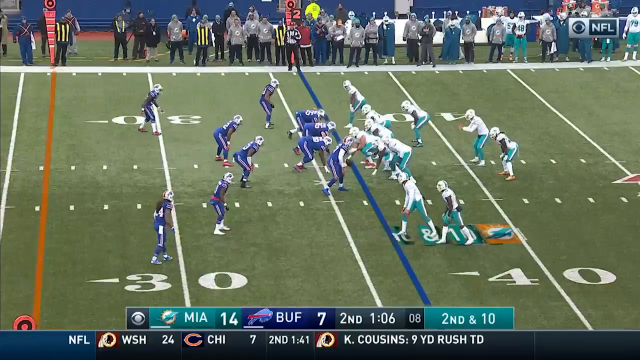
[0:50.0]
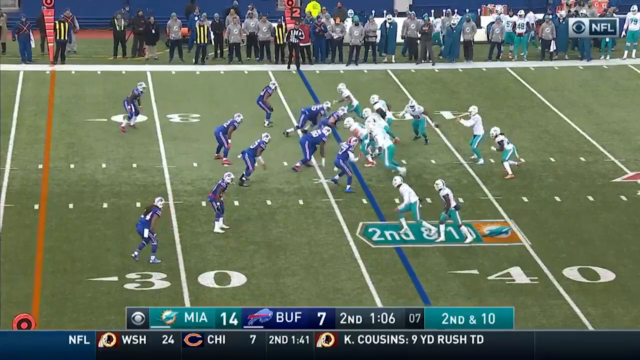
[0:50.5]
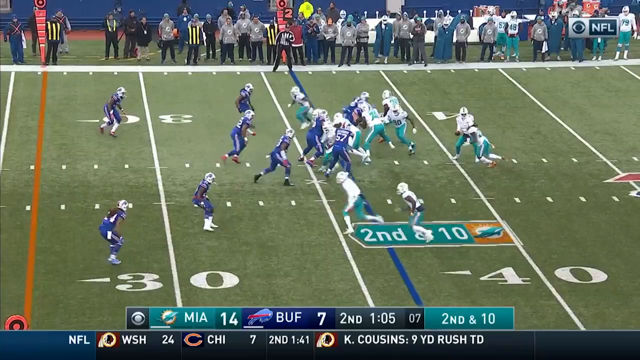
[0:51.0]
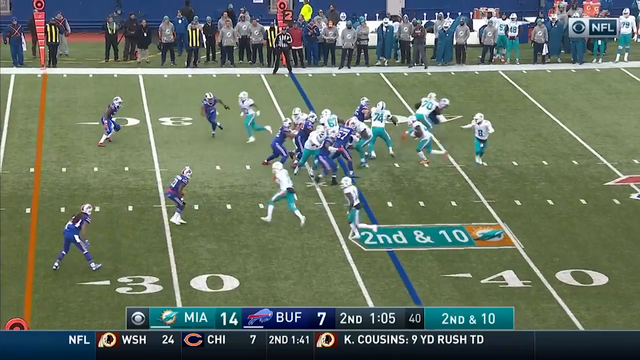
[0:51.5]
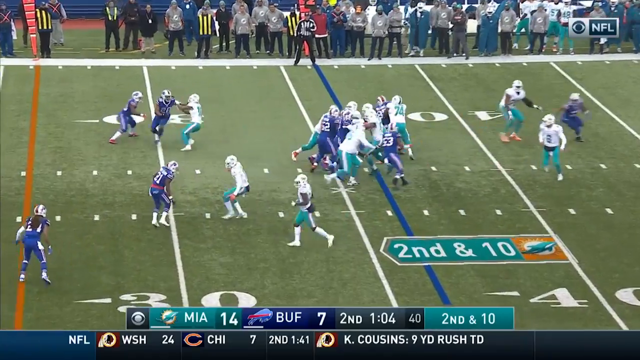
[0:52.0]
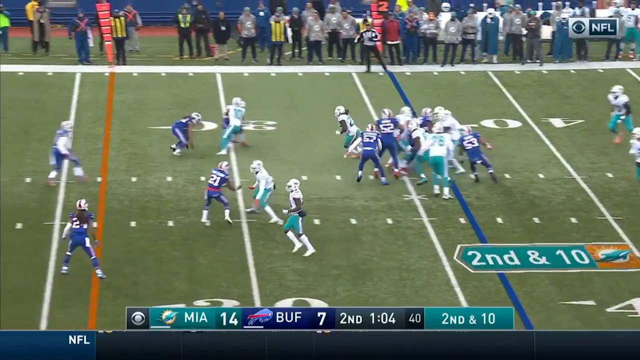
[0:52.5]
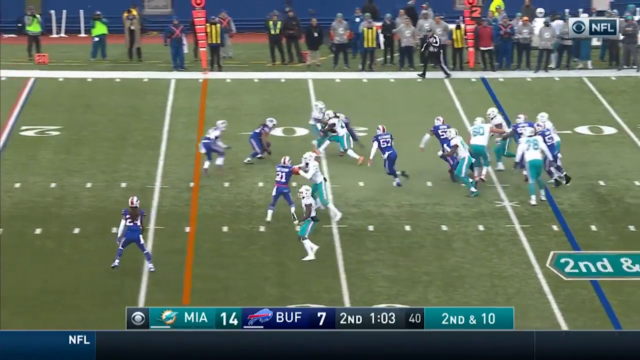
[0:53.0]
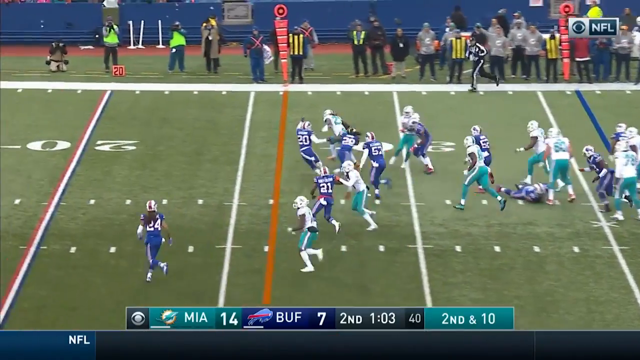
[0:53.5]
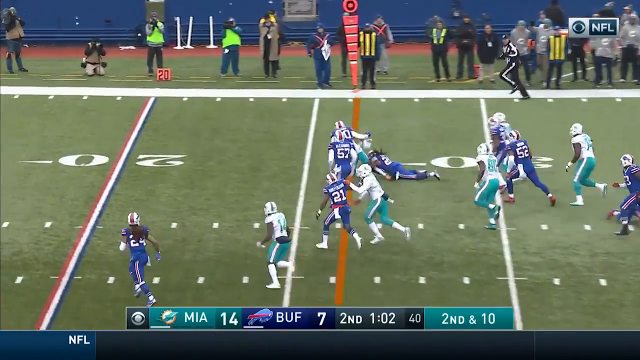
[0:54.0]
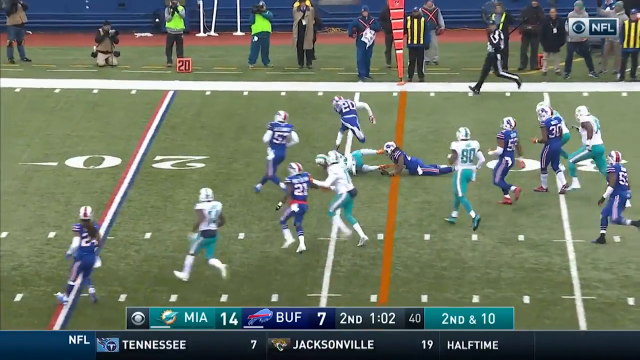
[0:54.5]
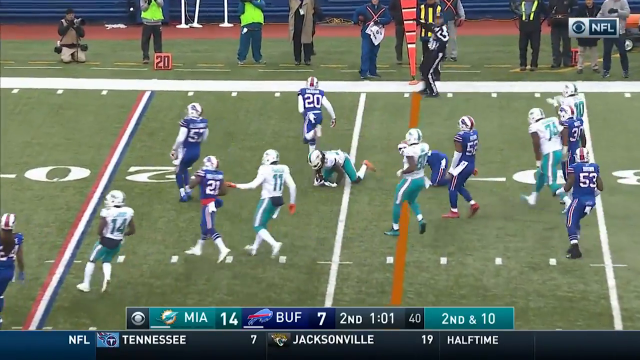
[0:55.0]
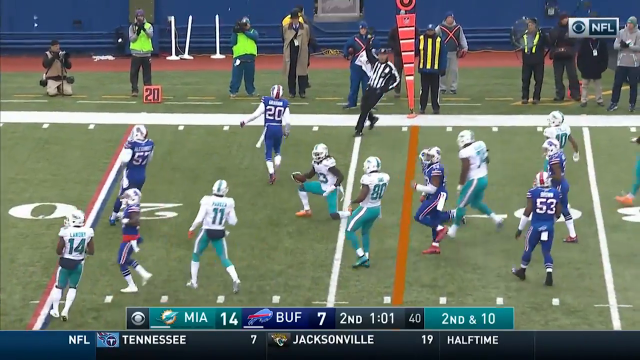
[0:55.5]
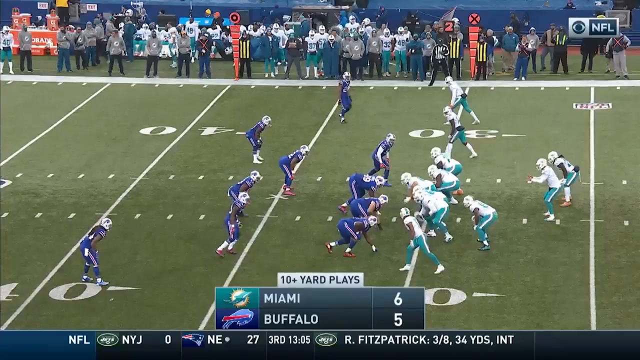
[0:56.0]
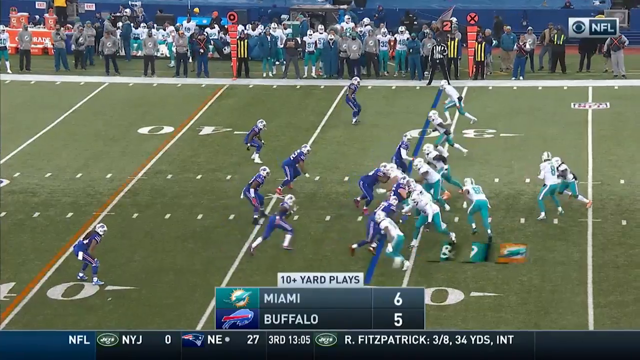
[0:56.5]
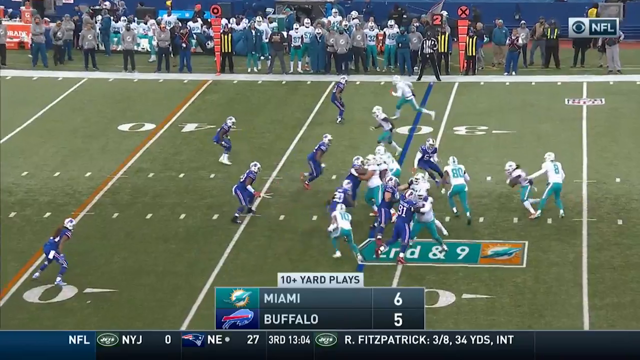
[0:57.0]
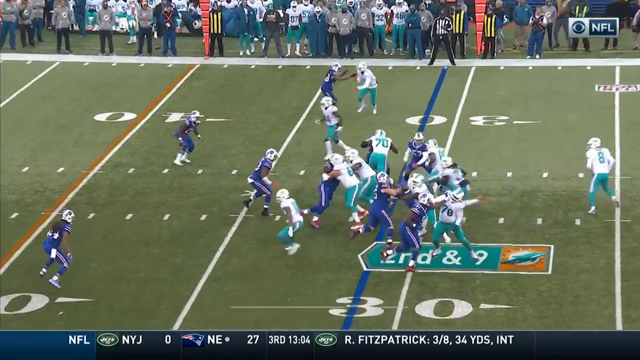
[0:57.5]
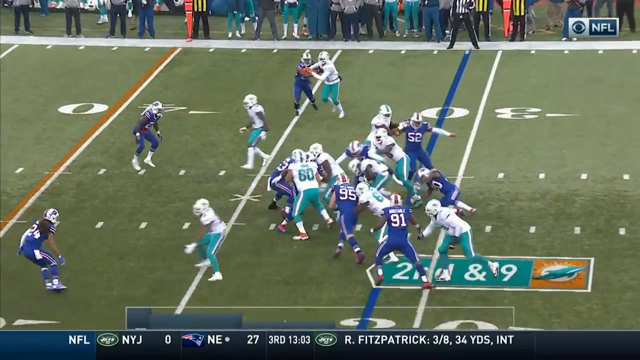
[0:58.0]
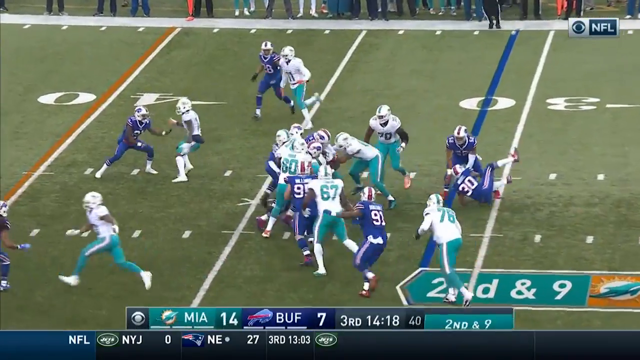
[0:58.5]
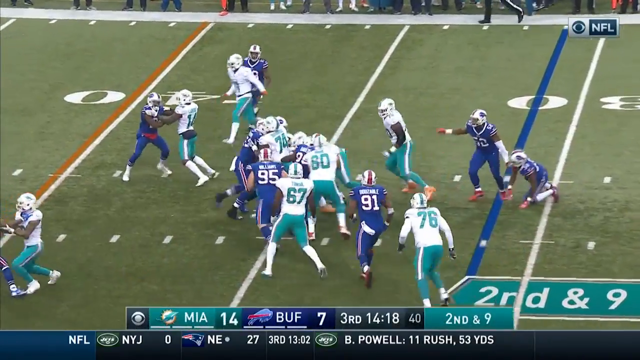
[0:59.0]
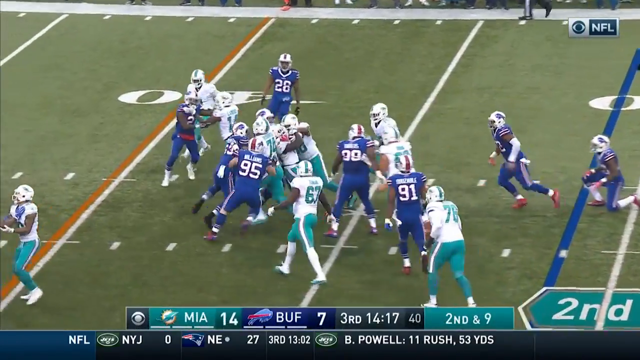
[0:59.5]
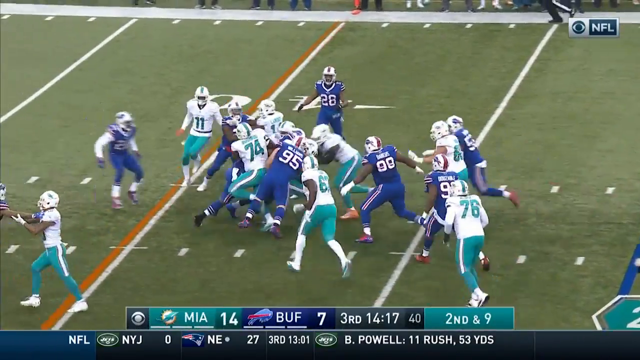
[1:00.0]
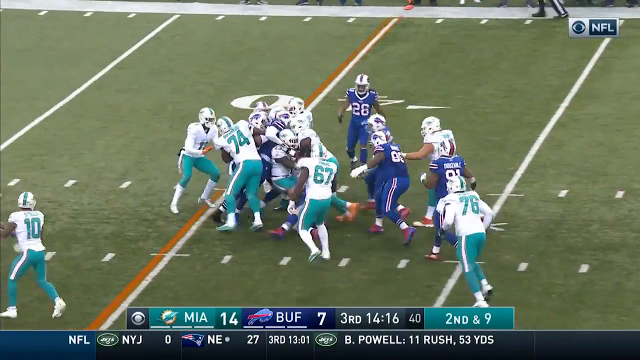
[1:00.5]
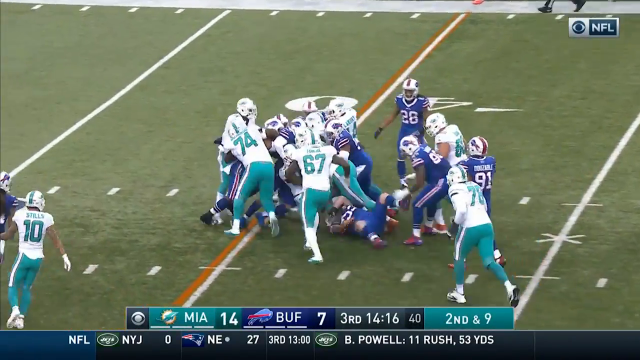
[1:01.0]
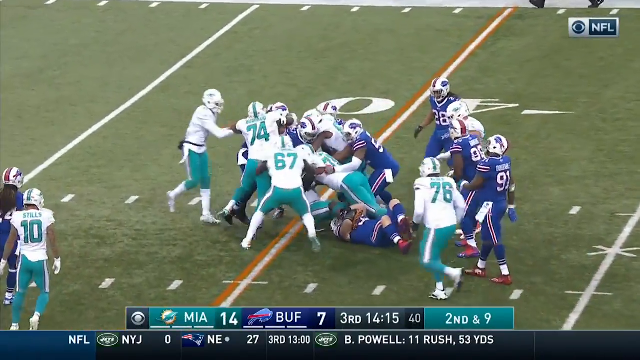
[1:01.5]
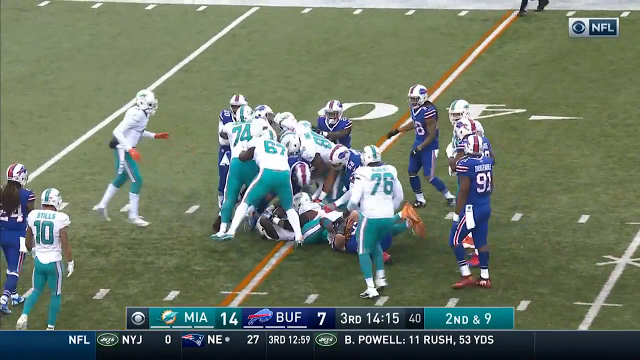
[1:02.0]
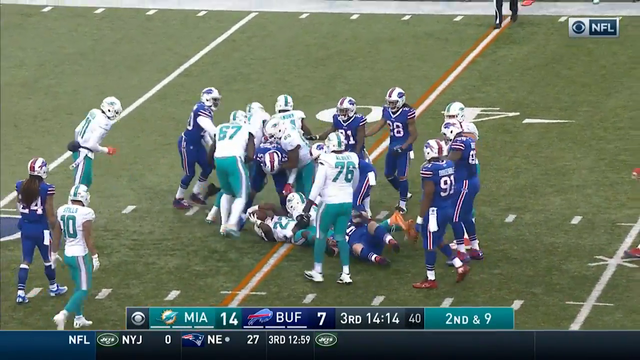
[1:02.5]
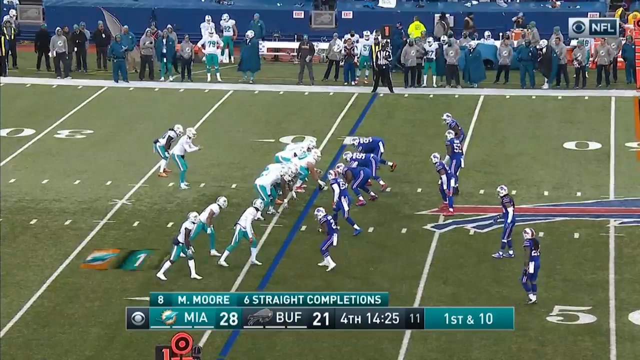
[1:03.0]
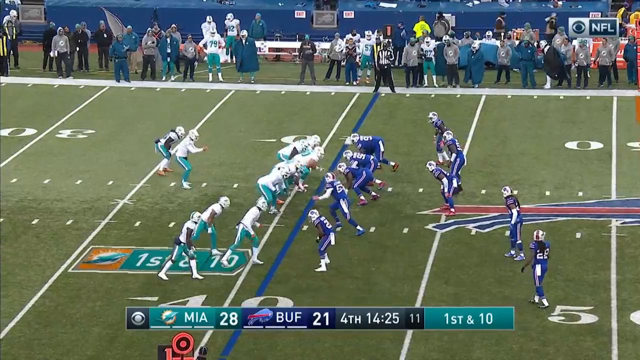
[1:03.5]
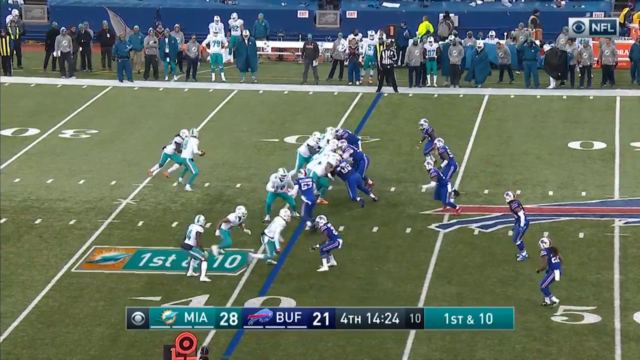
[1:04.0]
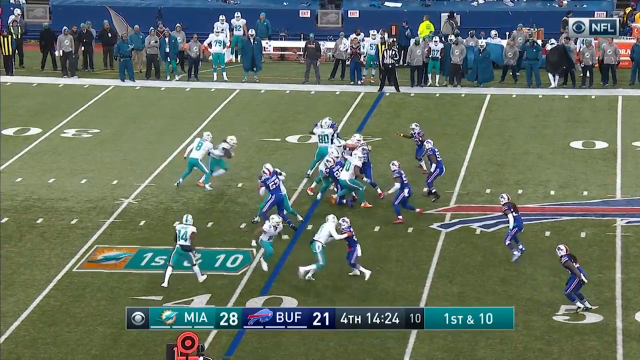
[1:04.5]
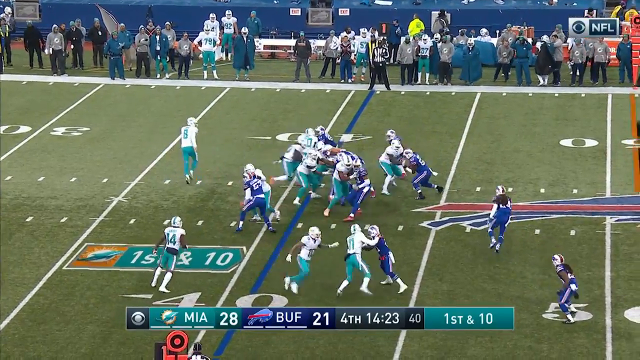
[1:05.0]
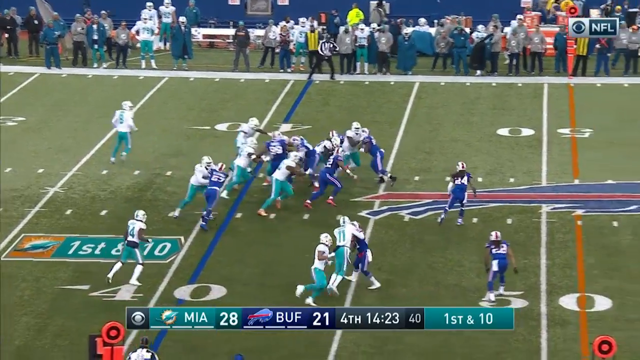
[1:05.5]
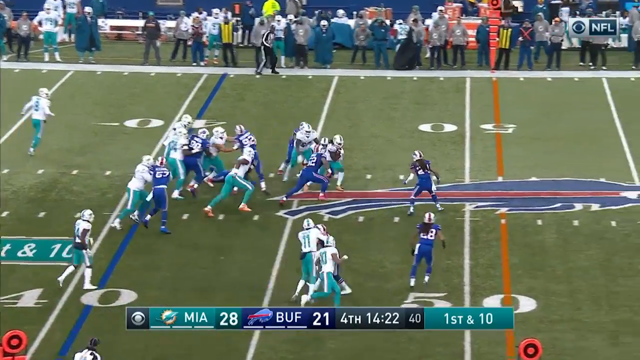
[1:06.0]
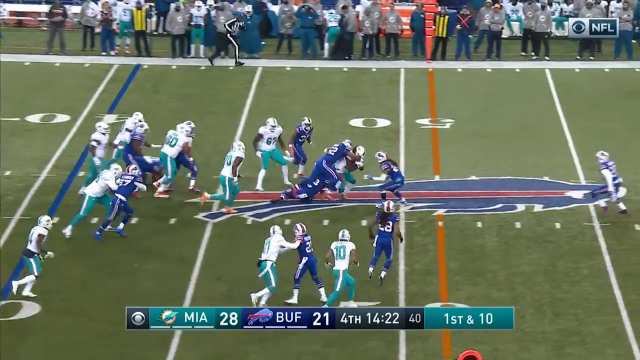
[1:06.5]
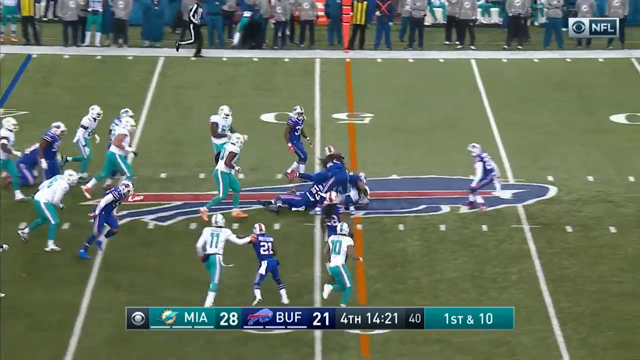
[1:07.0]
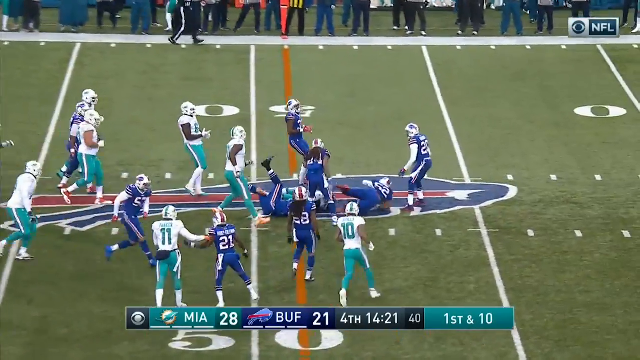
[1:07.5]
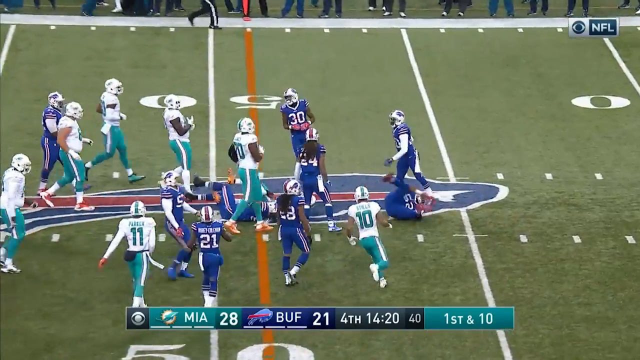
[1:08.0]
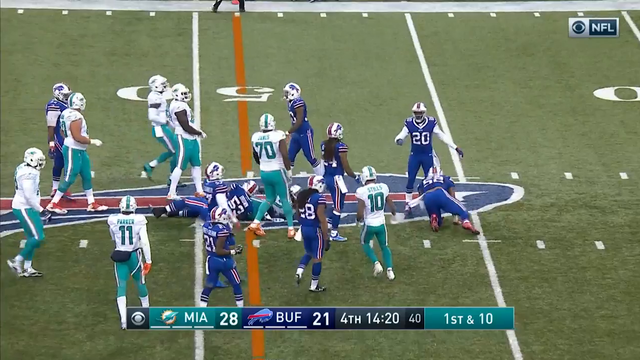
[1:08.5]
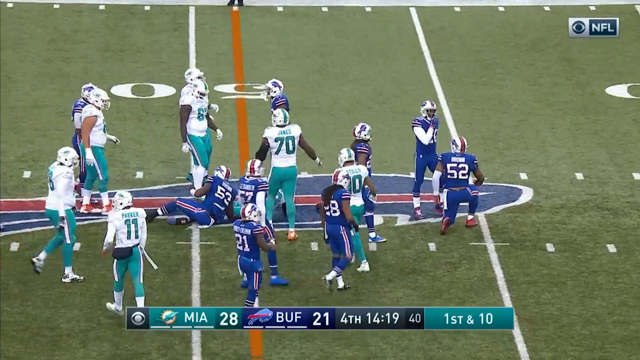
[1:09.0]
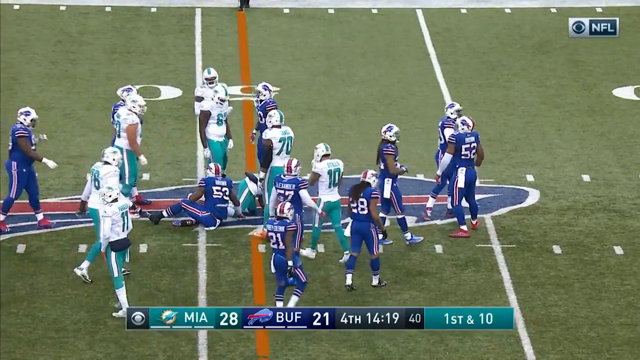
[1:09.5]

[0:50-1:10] More Miami Dolphins offensive highlights from the game against the Buffalo Bills. Around the 40-yard line, the quarterback hands the ball to another player, and a digital notification reading "second and ten" appears on screen. The player runs through a number of defenders and around to the right until one of them tackles his legs and brings him to the ground. In another highlight, the same player runs through the middle of the defense into two or three defenders; everyone forms a big pile, pushing forward or backward, and he ends up on the ground. Then, facing the opposite direction, Miami heads to the right of the screen. The quarterback hands the ball to this player, who runs straight through the middle of the defense until two players tackle him to the ground on the Buffalo Bills logo. The offense resets.